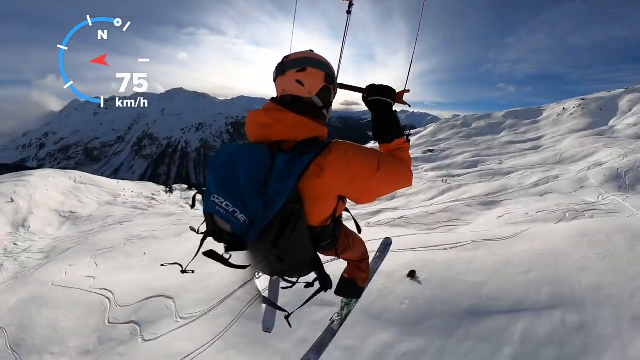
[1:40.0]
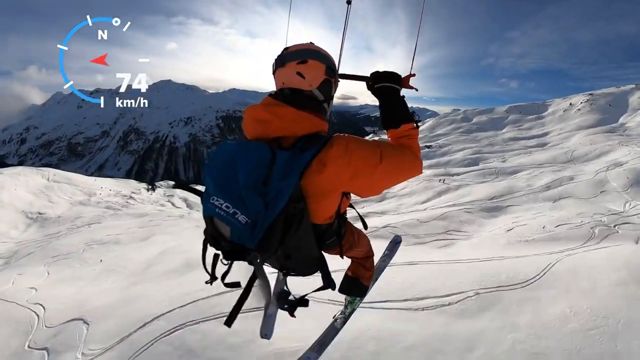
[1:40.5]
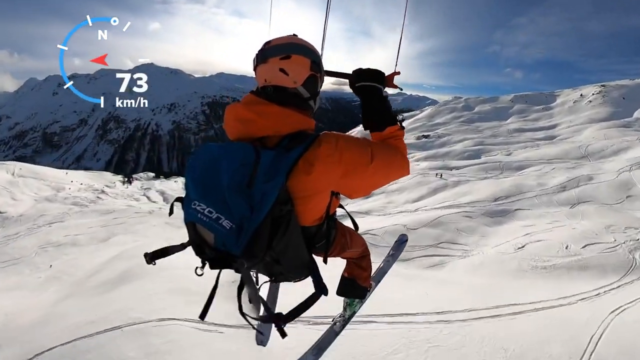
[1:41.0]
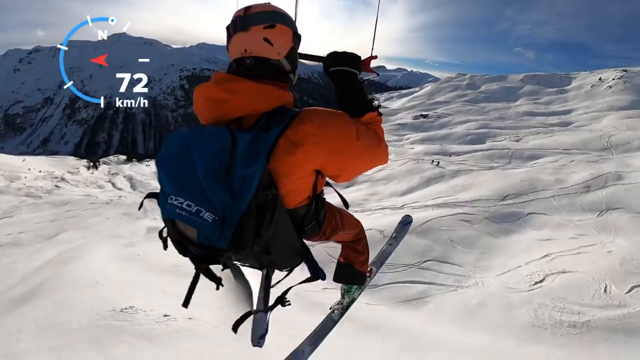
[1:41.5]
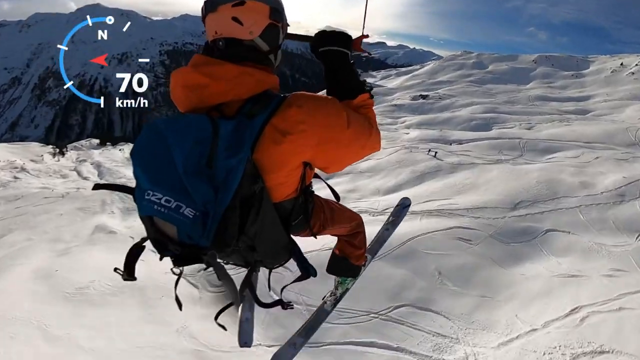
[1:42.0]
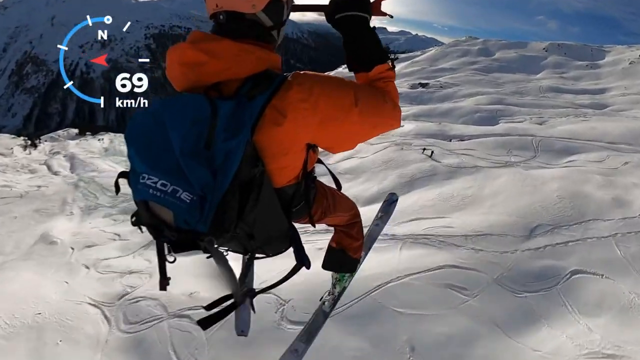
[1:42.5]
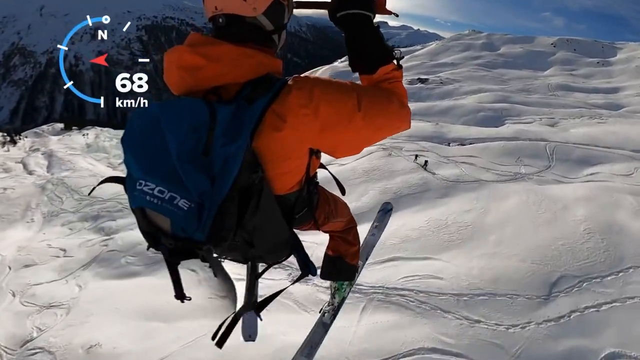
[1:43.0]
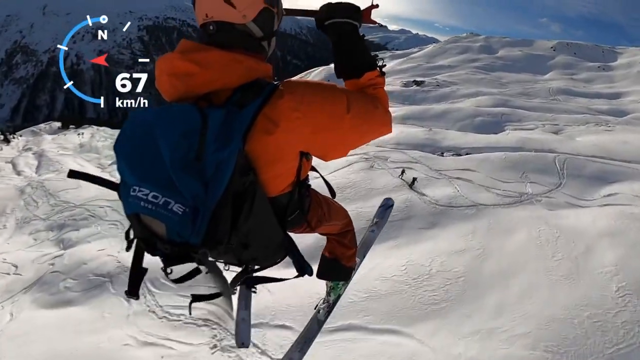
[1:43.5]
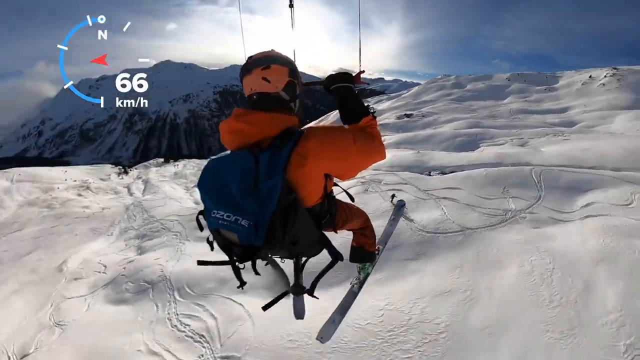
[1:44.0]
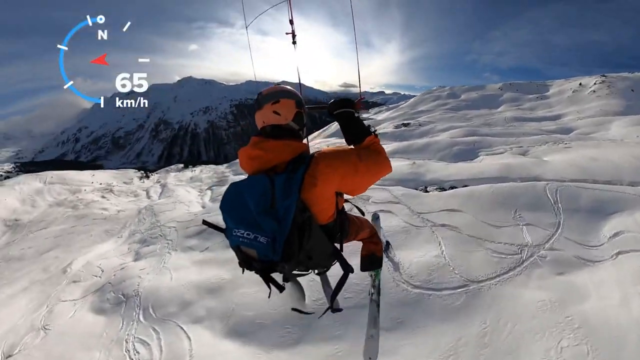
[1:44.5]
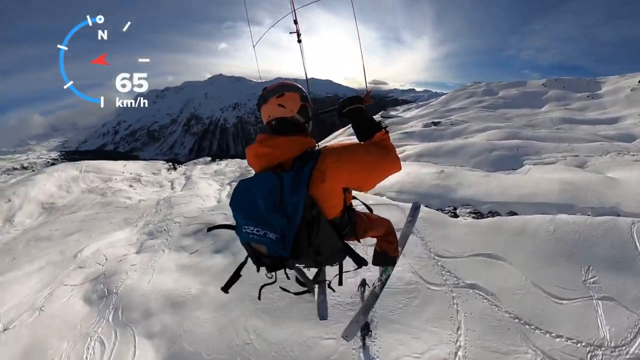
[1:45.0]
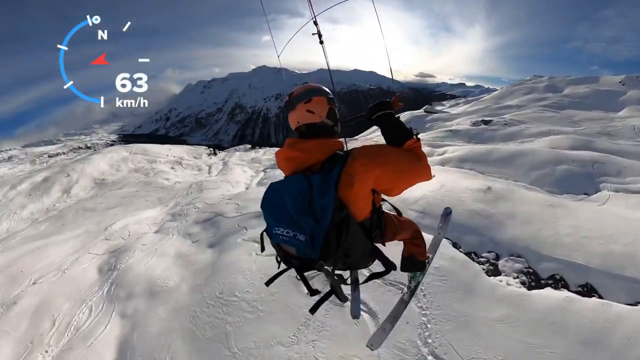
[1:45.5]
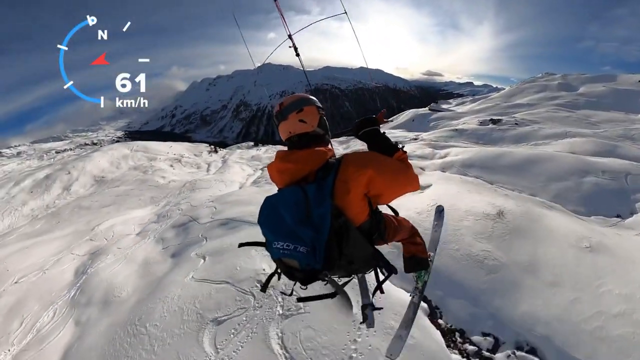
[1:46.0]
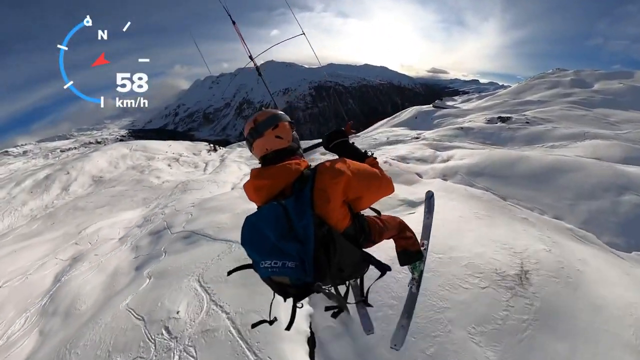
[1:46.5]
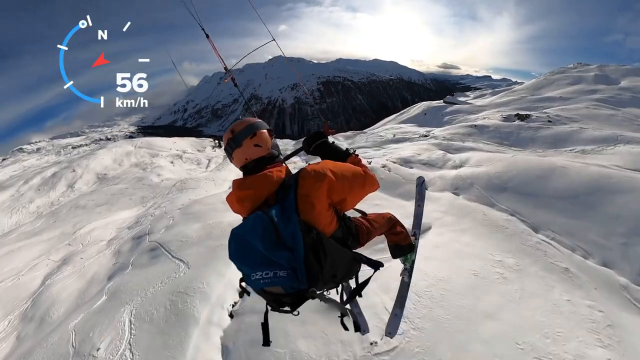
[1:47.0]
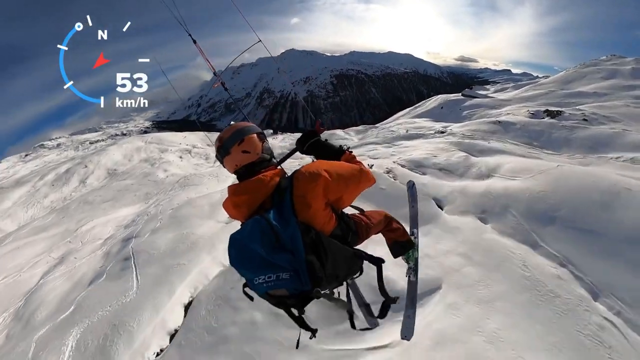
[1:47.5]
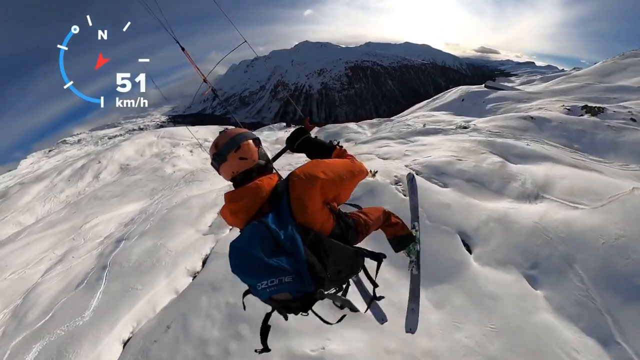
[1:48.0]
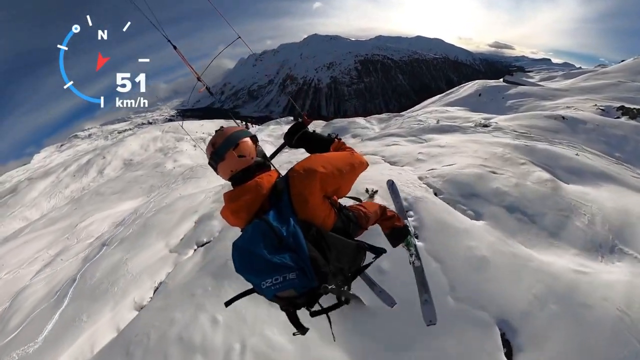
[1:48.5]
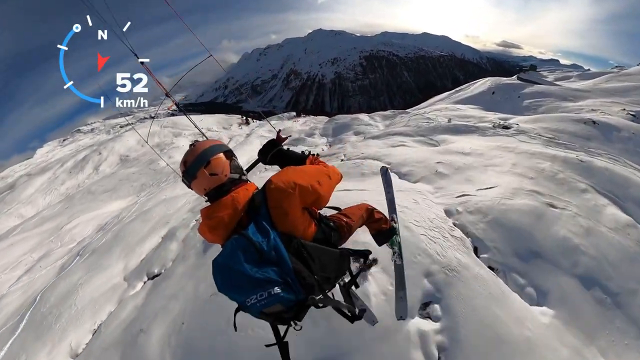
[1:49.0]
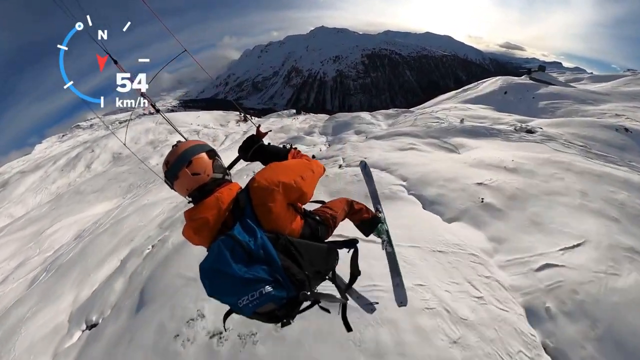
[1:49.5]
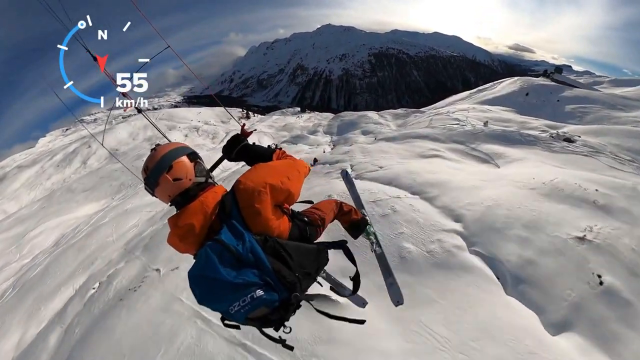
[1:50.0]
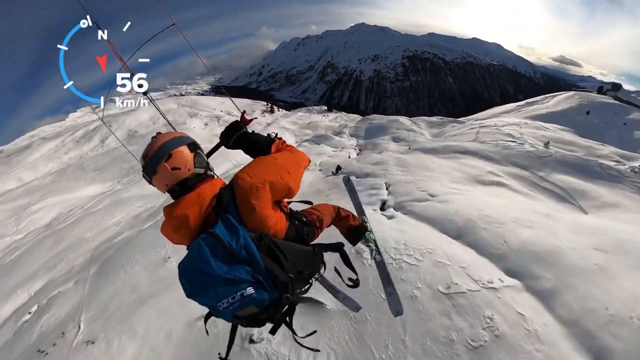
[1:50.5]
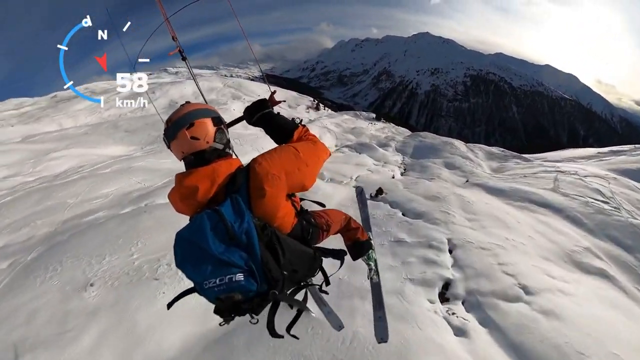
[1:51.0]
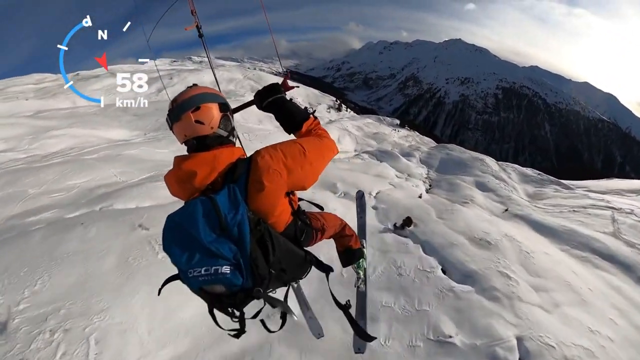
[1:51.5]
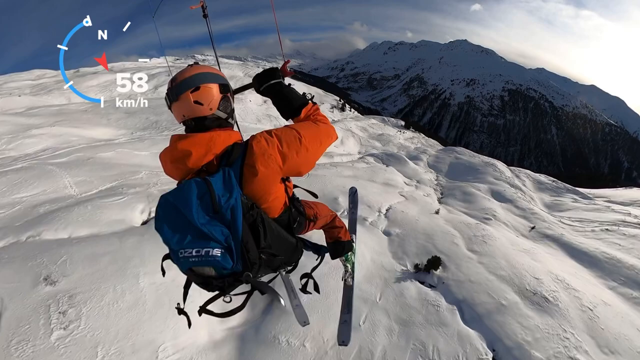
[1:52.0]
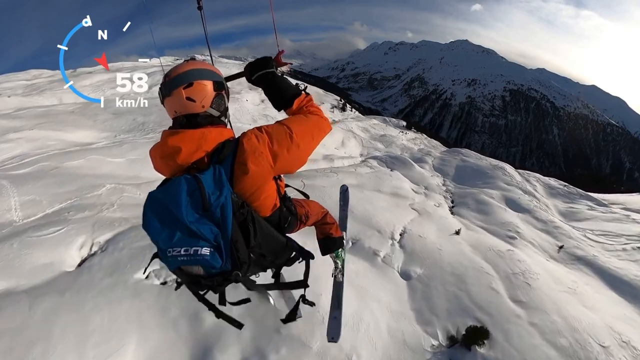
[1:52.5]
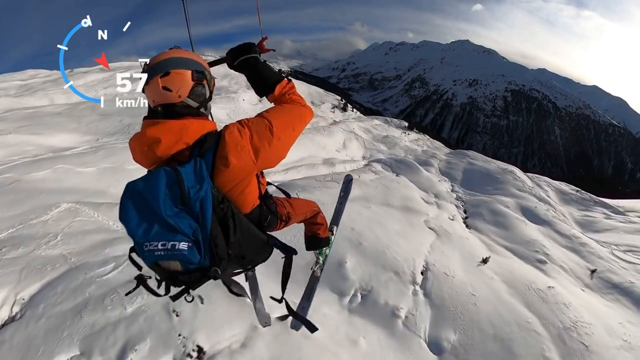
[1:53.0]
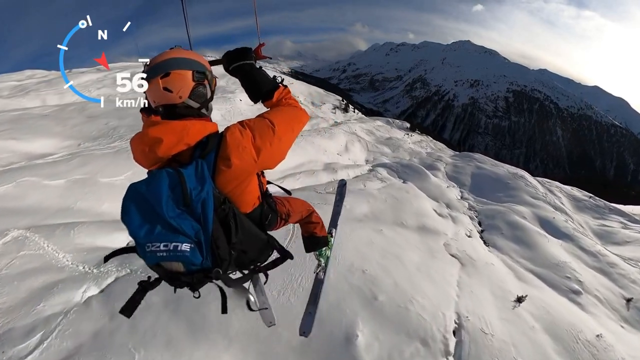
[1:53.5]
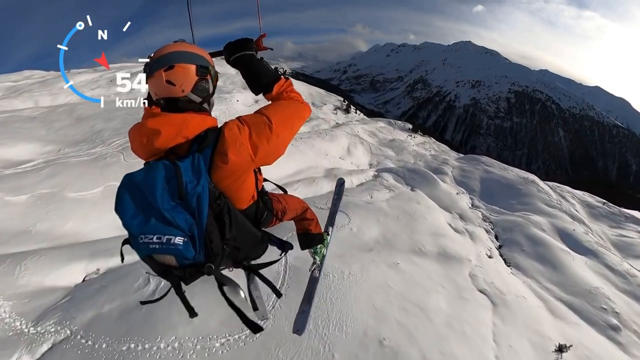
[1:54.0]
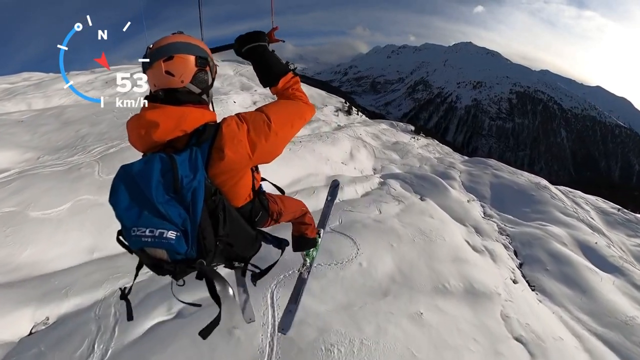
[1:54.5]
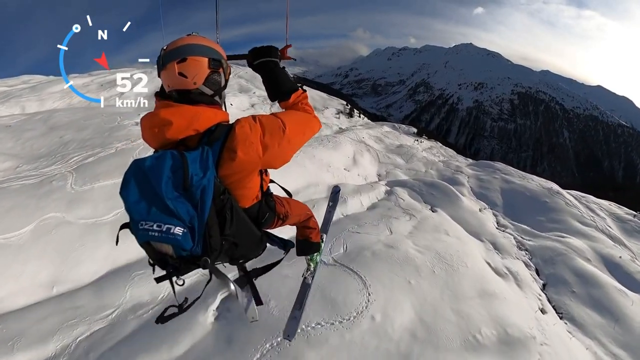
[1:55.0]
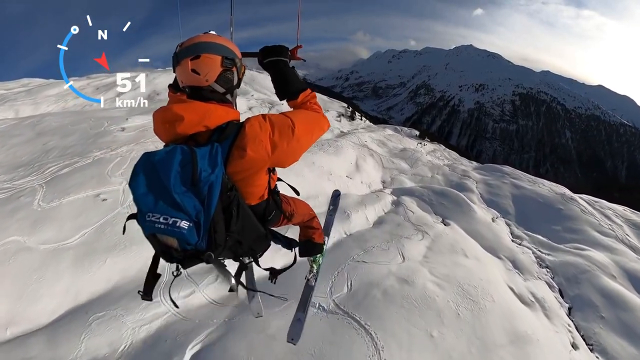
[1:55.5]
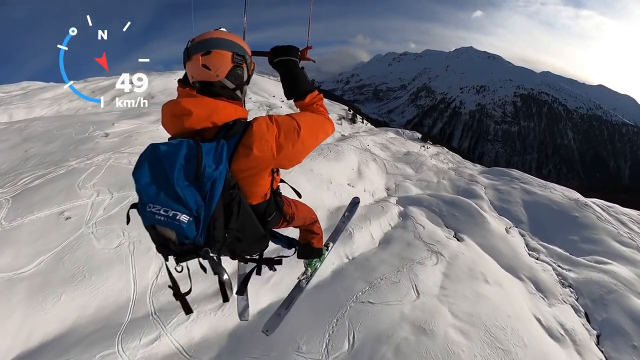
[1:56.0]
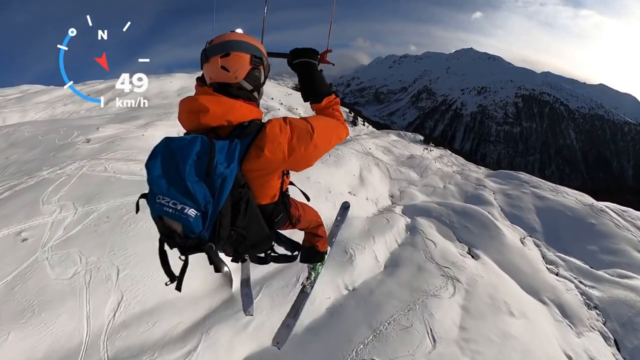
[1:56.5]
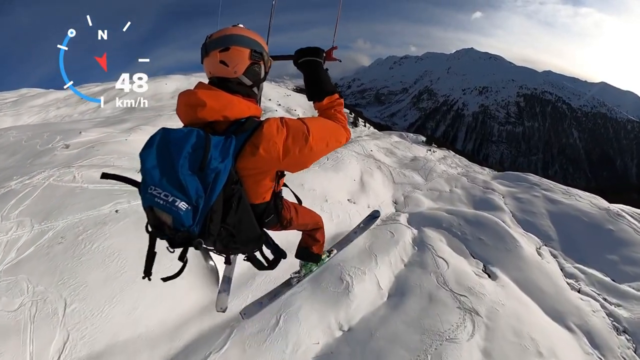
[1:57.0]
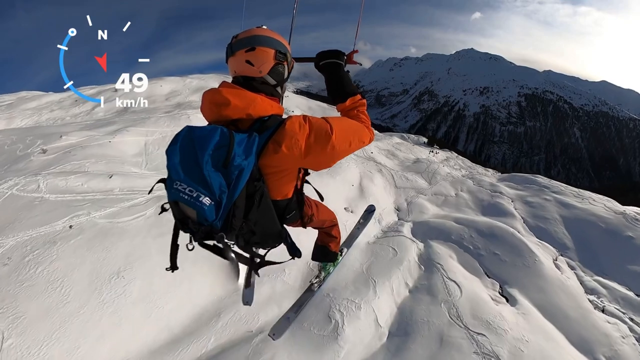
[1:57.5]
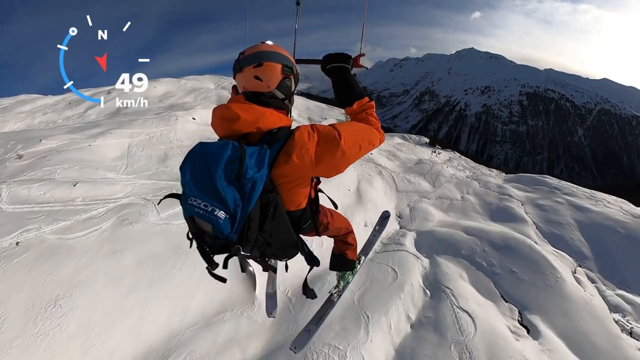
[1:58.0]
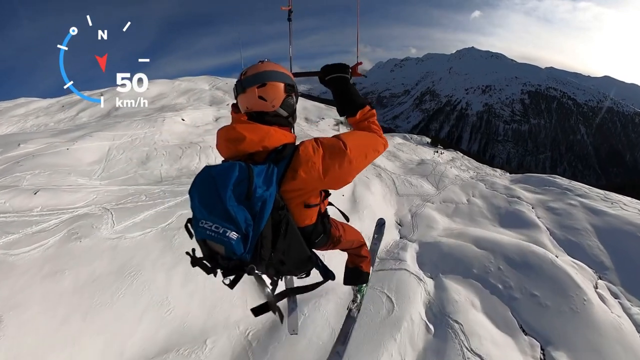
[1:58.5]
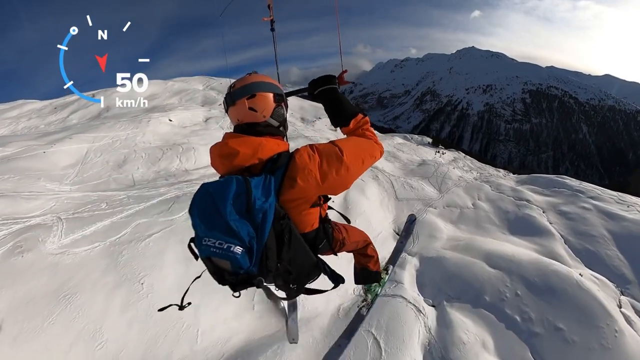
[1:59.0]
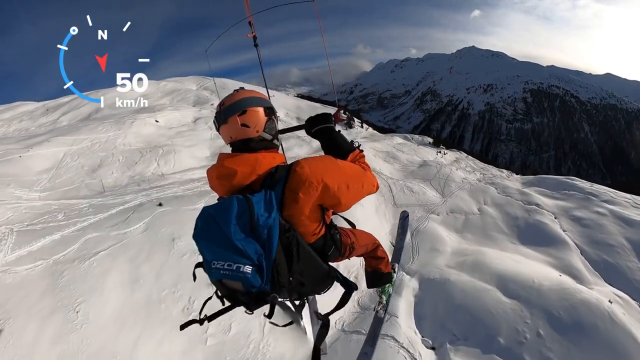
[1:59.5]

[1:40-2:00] The man starts at around 70 kilometers per hour, and his speed drops as he continues down the mountain. Different tracks in the snow and undisturbed places are still visible. At one point the camera backs off a little from the man, and he leans to the left and to the right. The mountaintop is a little clearer in this shot: most of the mountain in front of the man is covered in snow, but some areas have no snow. The sun is behind those mountains, with its light clearly coming from behind. There are lots of clouds in the sky. At the end, the speed drops to 50 kilometers per hour. It is just a man going down the mountain.